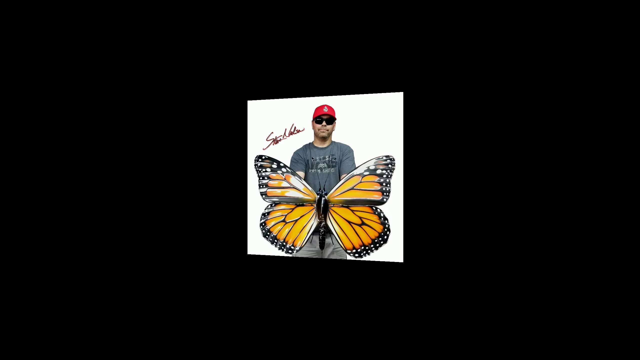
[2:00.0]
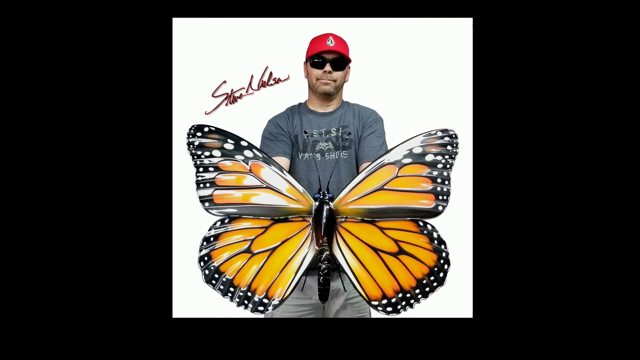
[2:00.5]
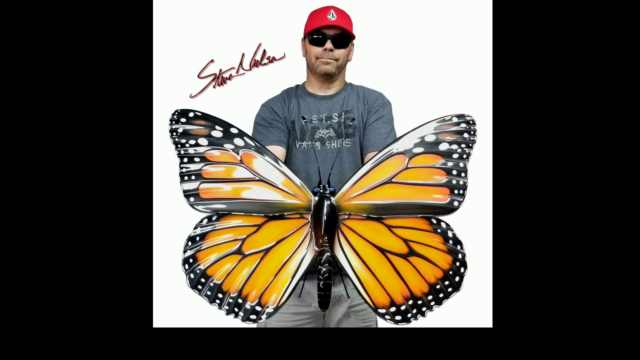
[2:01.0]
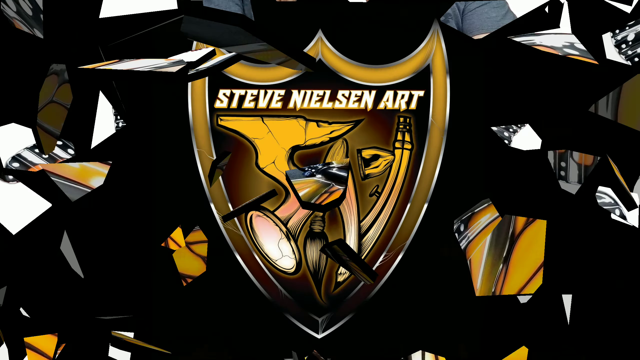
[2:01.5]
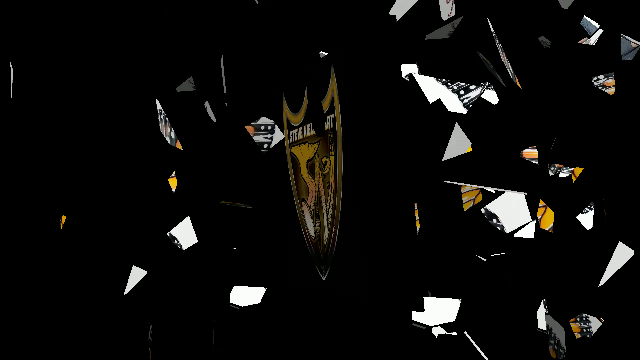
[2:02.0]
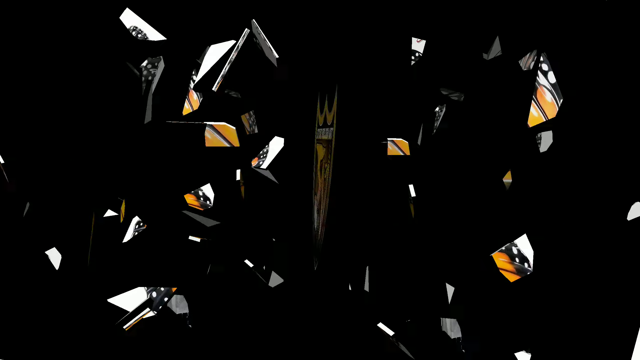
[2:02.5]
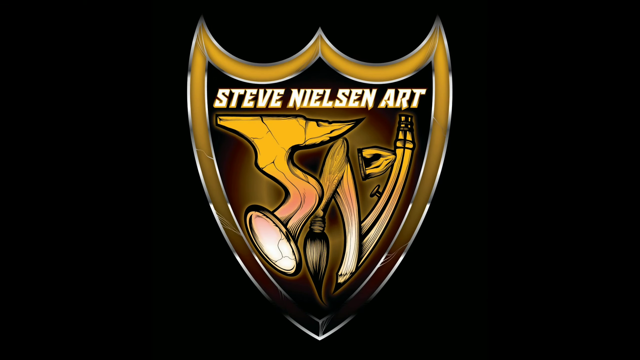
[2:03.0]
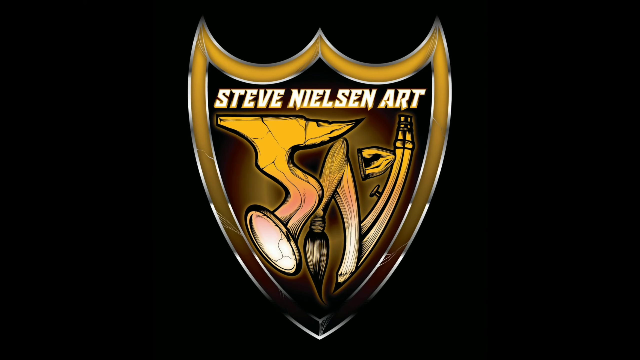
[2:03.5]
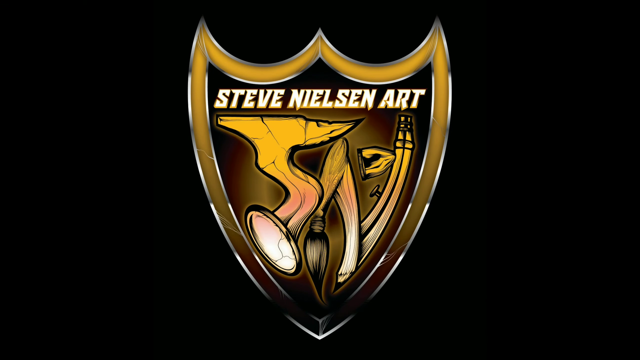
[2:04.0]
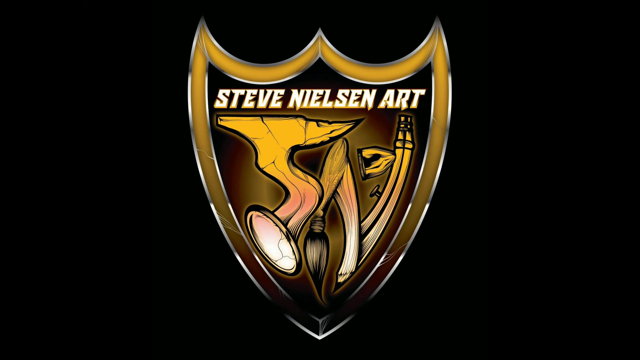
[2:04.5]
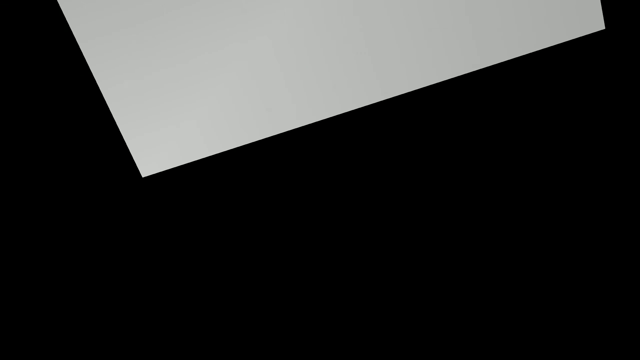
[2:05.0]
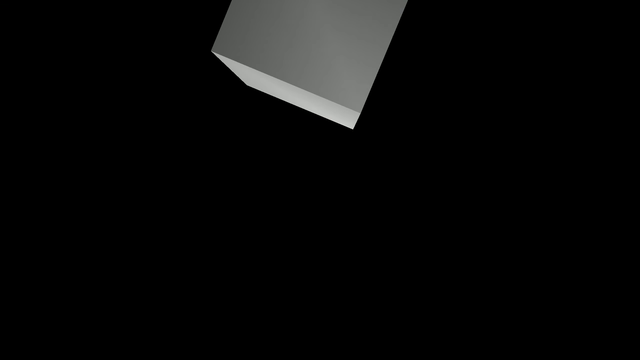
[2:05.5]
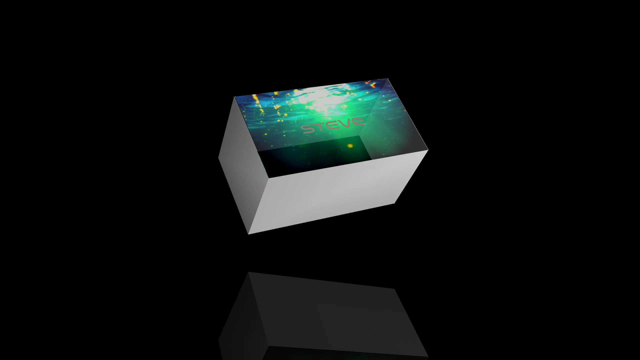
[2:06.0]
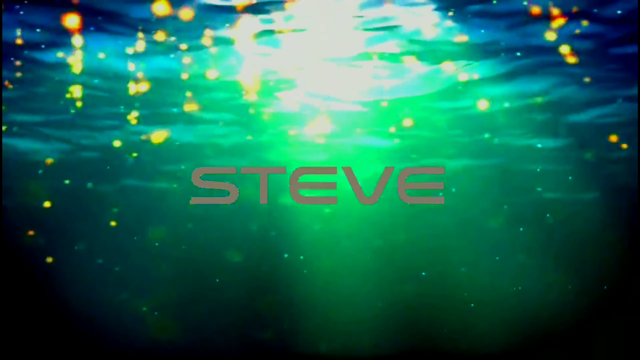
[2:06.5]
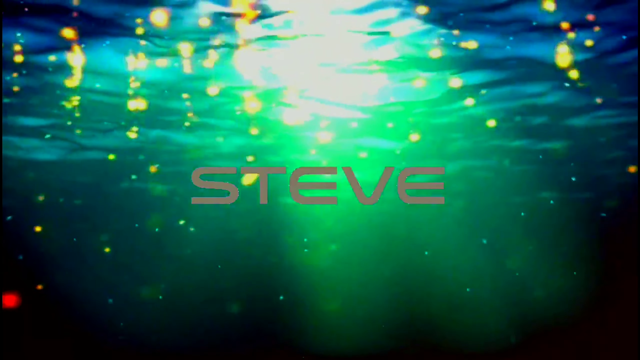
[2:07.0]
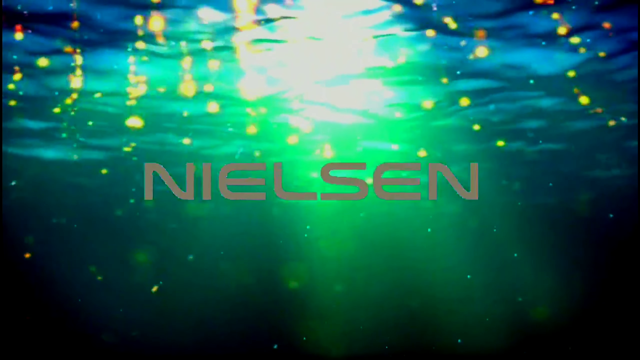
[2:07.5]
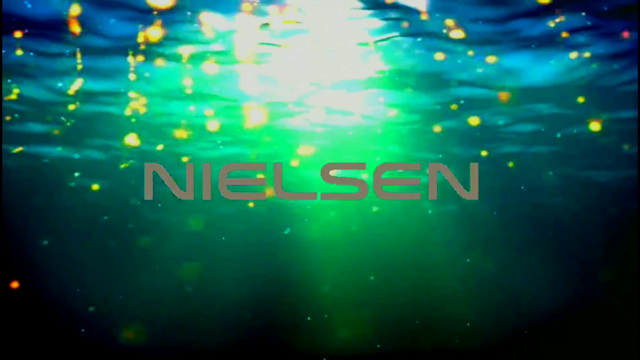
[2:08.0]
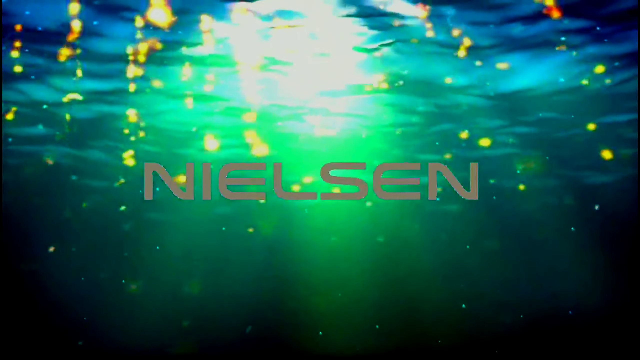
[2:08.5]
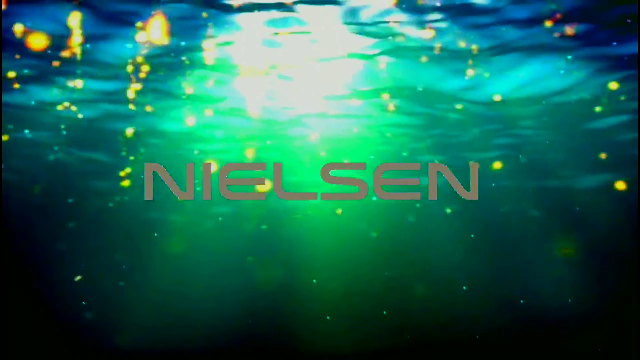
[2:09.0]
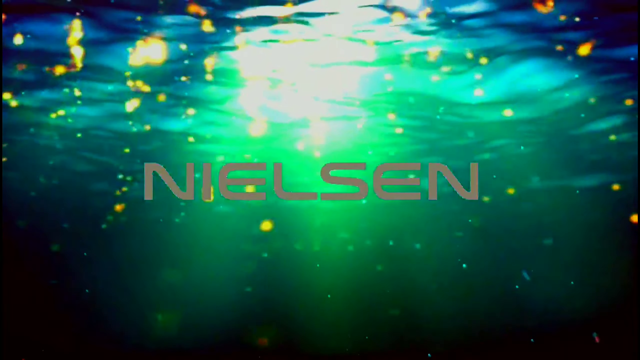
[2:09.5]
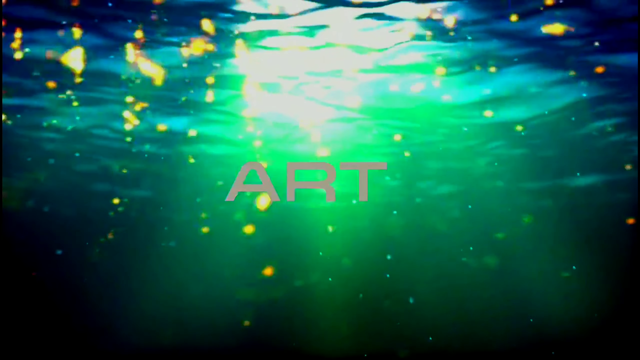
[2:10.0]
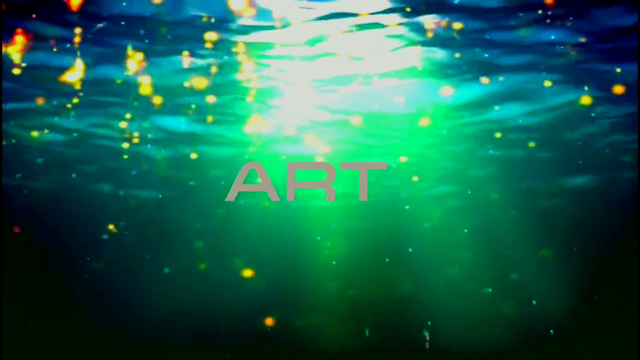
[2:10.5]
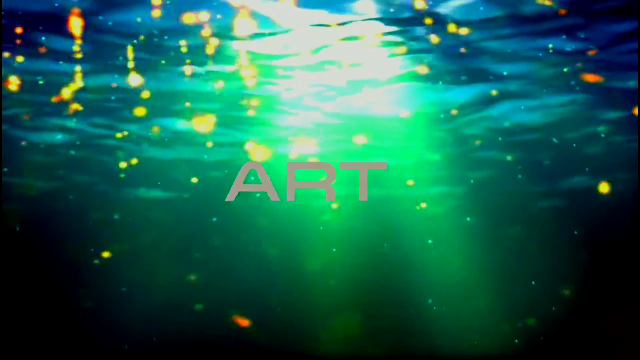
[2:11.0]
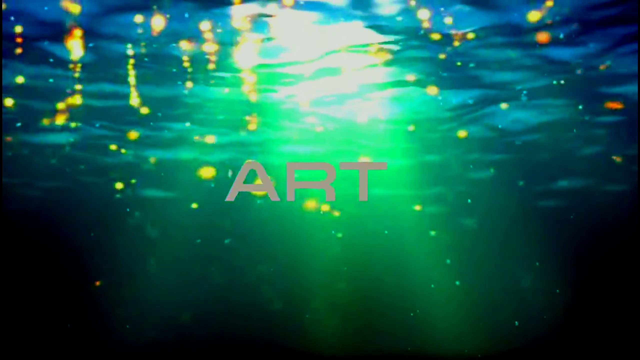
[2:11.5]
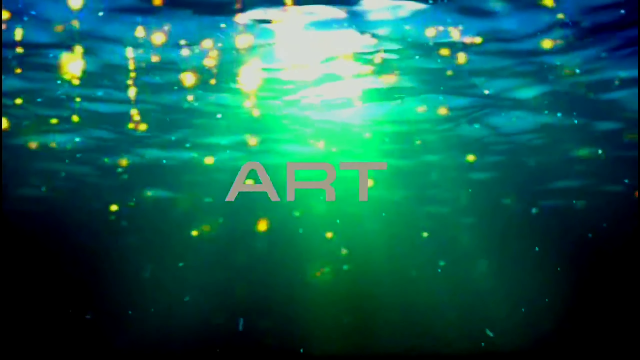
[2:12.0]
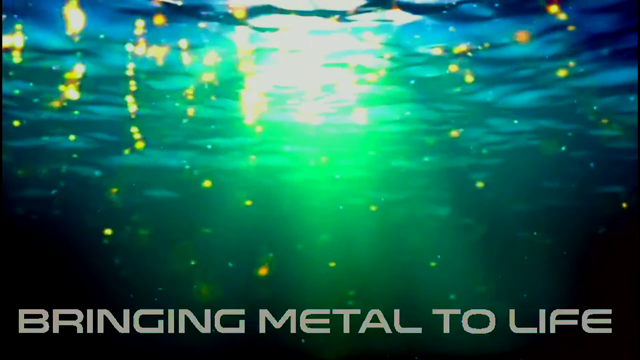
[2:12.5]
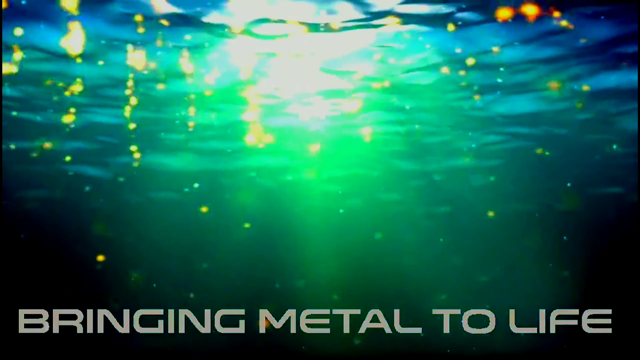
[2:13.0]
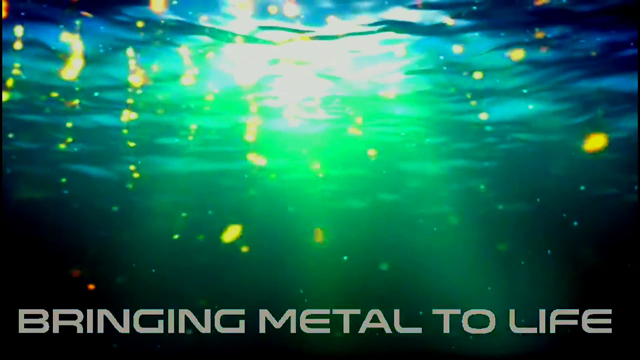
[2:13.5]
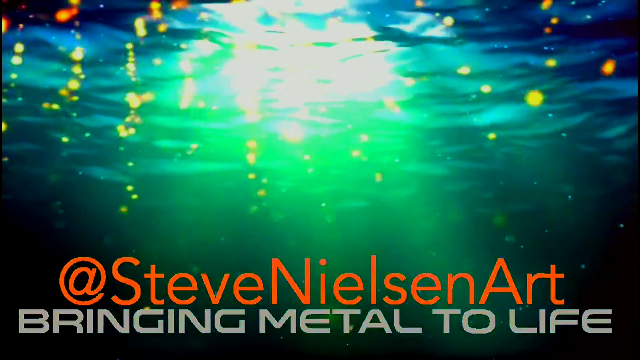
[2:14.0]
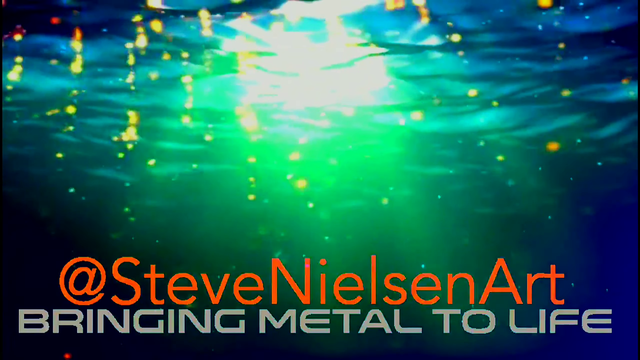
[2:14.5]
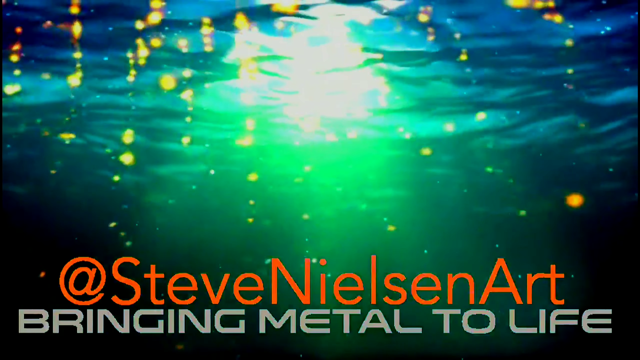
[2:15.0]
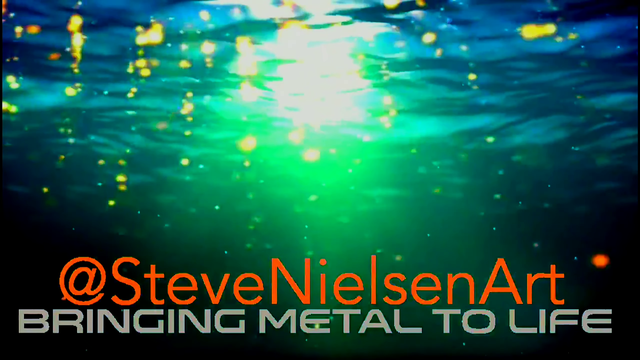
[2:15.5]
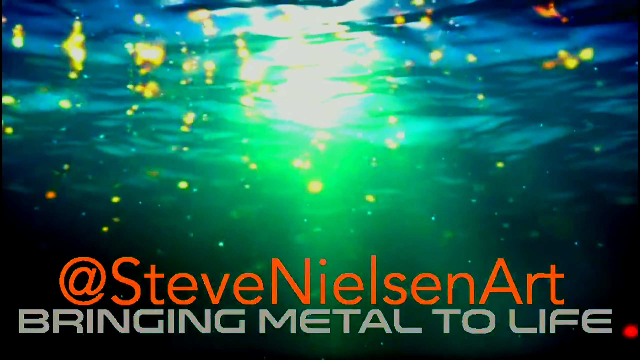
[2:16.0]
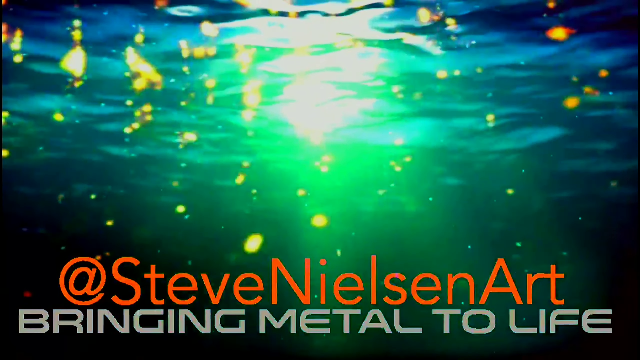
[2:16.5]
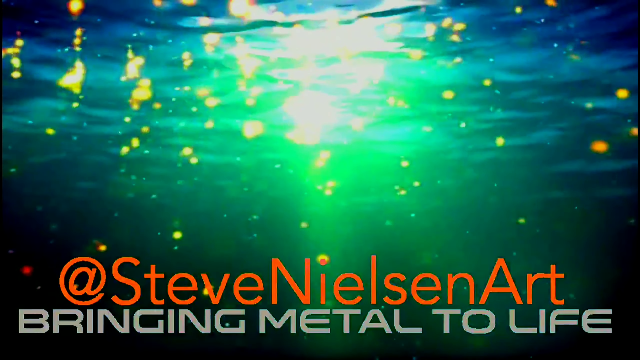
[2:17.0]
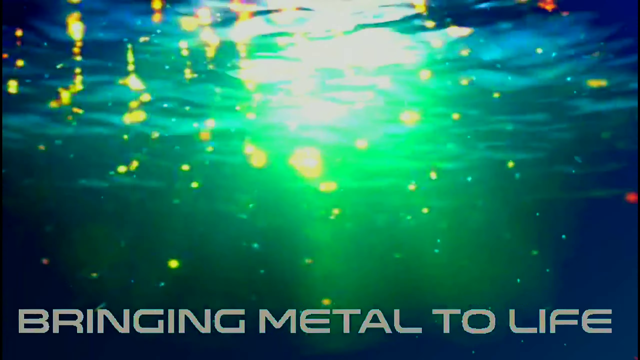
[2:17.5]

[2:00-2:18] An image pops up showing what looks like a monarch butterfly, and behind it stands a man wearing a gray short-sleeve Vans t-shirt, dark sunglasses and a red hat. There seems to be a signature to the left of his head. He is probably Steve Nelson. The image shatters, its pieces going left and right, and the same yellow shield reading "Steve Nelson art" appears. It spins around multiple times from right to left, with the shards of the previous image surrounding it; the shards fall to the sides and it stops on the yellow Steve Nelson art logo, zooming in on it before it disappears. A giant box appears, gray on the outside and multicolored on the inside; it tumbles around until it stops, then zooms in to show a mass of color that looks almost like watercolor, in green, blue and some yellow, with "Steve" in gray lettering in the center.